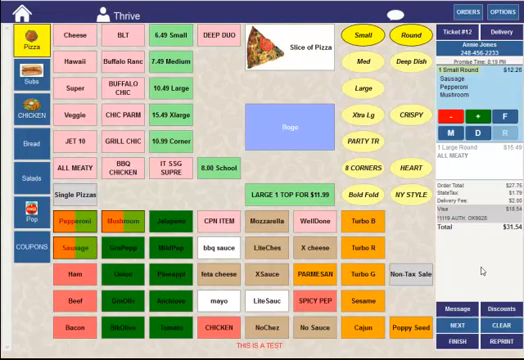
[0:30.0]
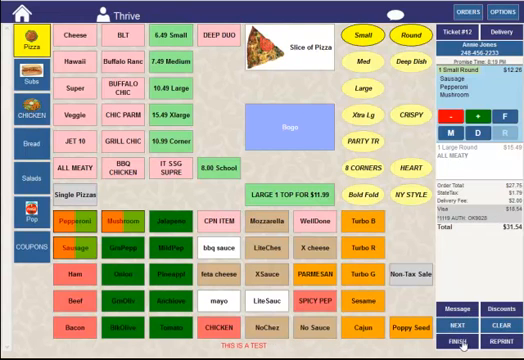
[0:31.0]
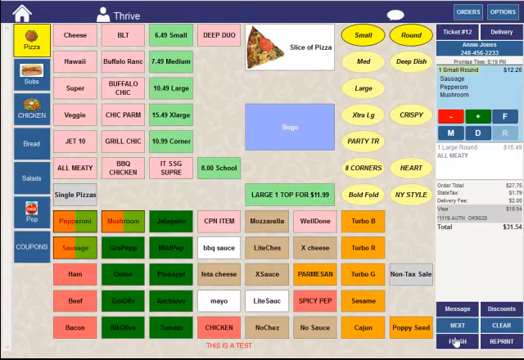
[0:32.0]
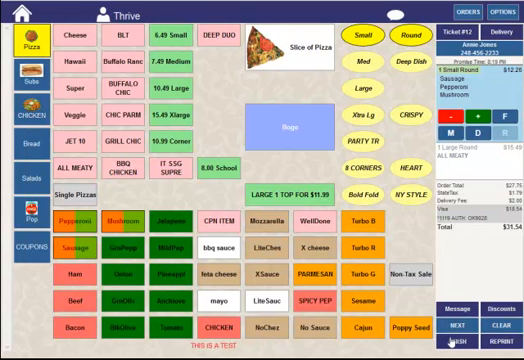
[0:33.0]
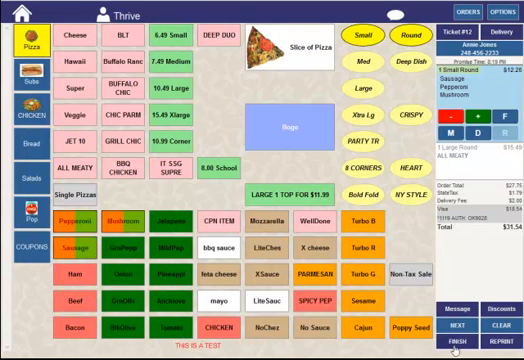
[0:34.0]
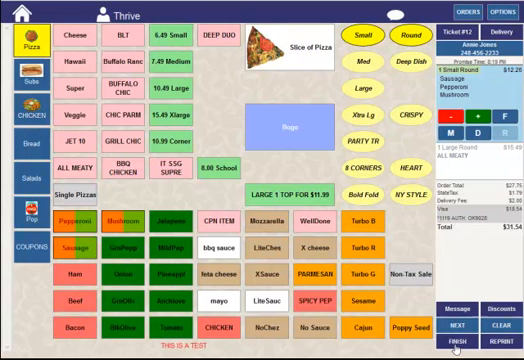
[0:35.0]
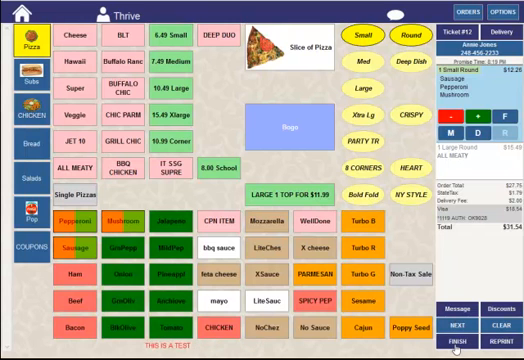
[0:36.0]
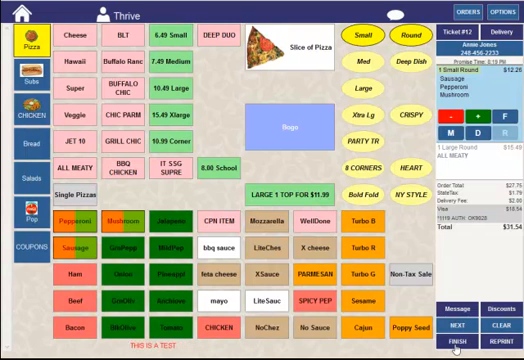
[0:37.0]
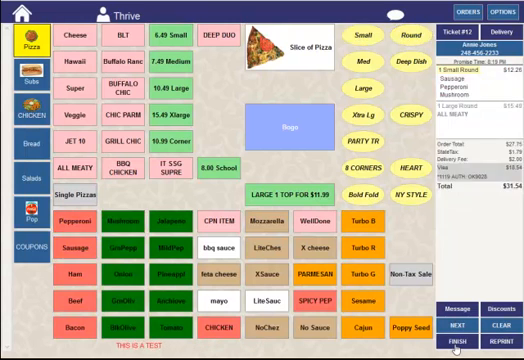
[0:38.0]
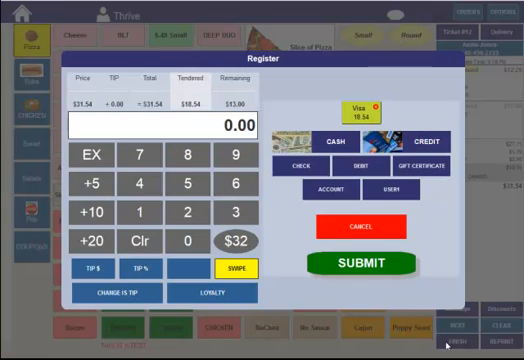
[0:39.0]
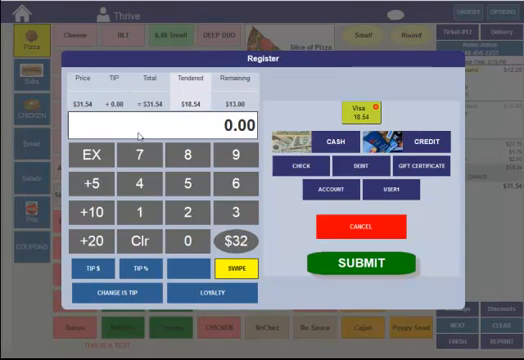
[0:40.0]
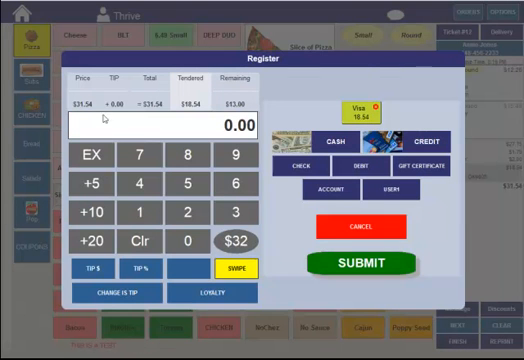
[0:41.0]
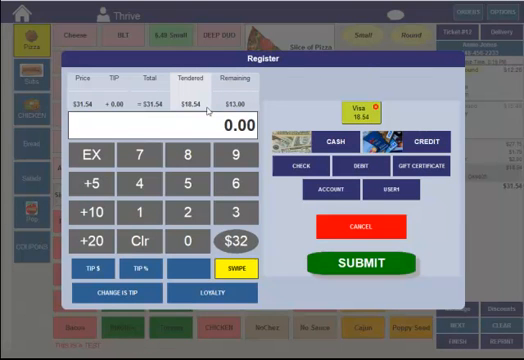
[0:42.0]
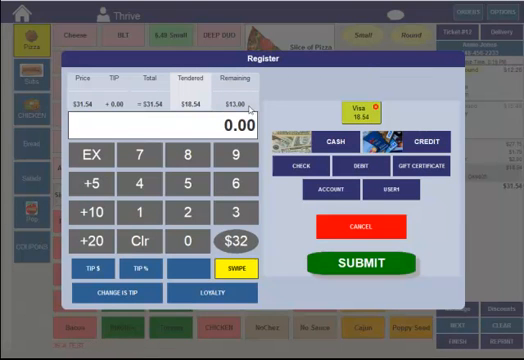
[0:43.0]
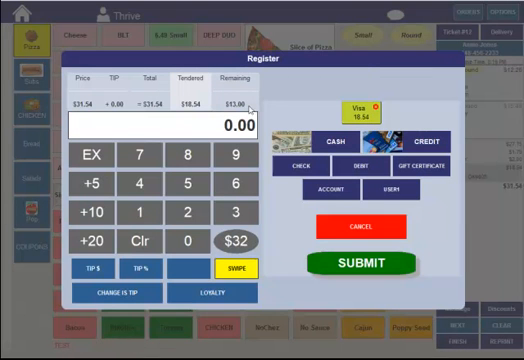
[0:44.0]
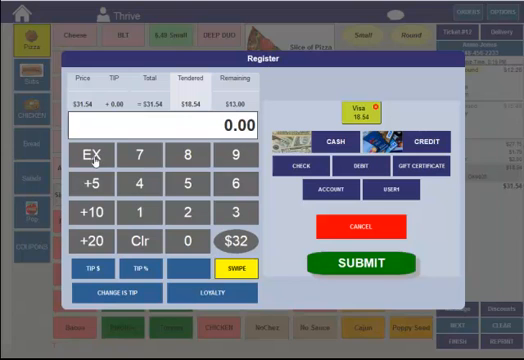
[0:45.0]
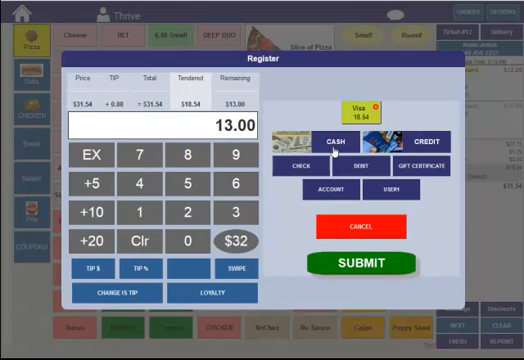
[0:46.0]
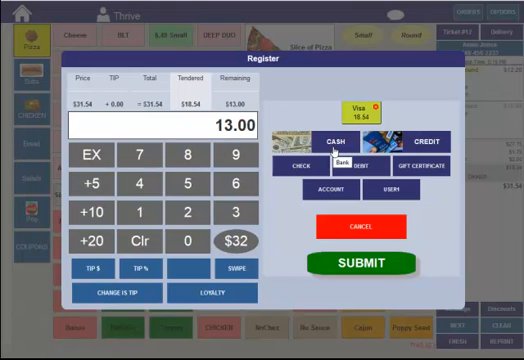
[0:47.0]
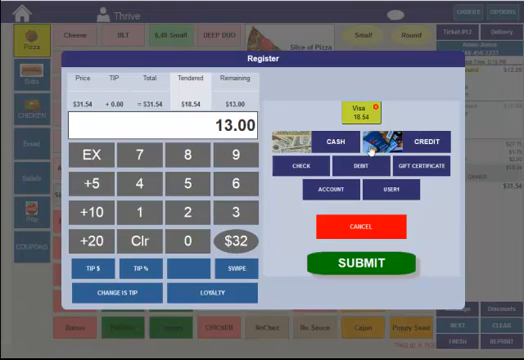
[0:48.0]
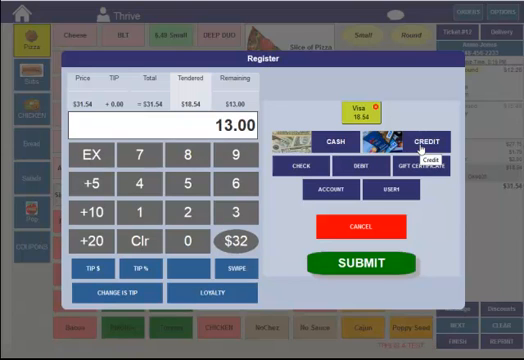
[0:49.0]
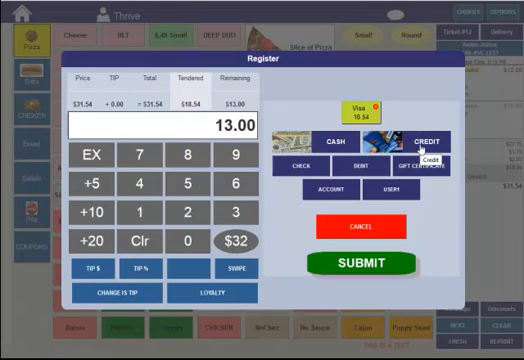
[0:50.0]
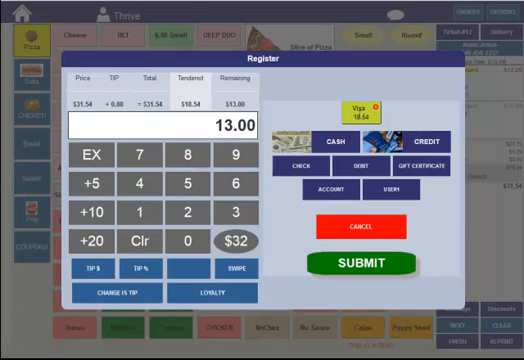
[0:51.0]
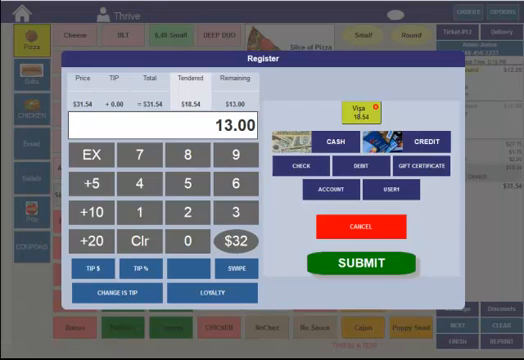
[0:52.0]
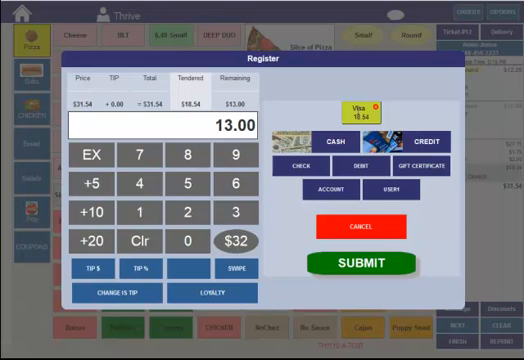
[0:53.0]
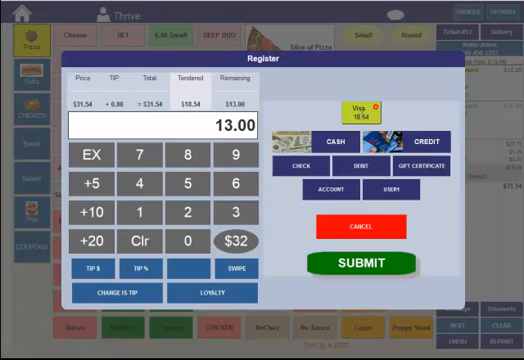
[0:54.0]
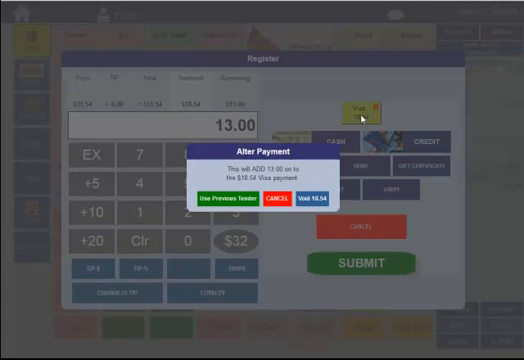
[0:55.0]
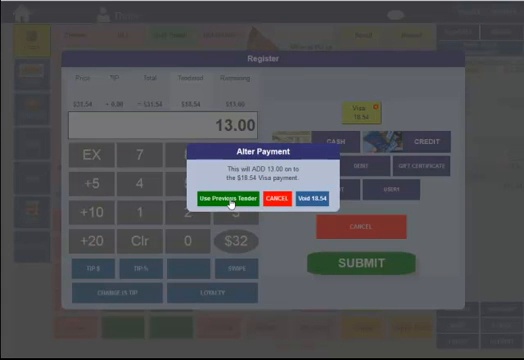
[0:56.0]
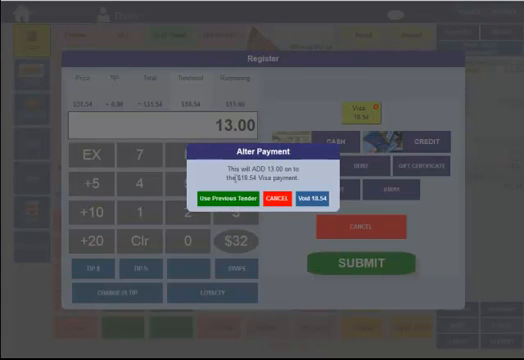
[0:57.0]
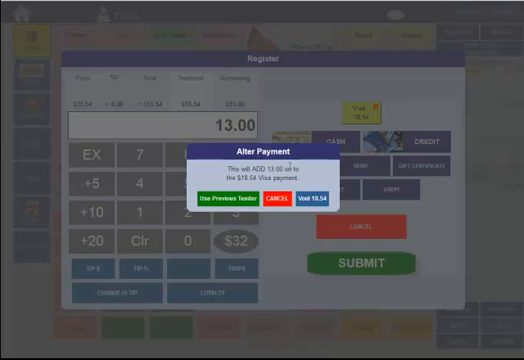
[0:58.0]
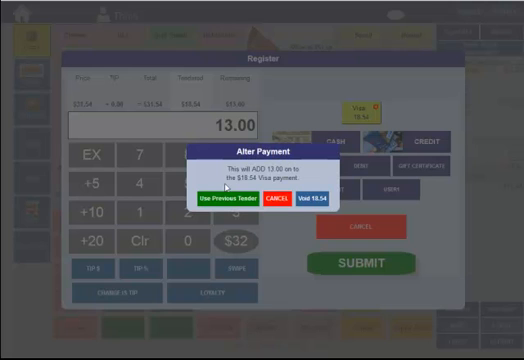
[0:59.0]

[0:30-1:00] What seems to be the restaurant's menu lists pizza, subs, chicken, bread and salads. The pizza menu is open, with many options: different types of cheeses, sauces and pizza flavors, and sizes from small to medium, large and extra large, as well as round and deep dish. In the middle, in green, is written "large one top for $11.99". On the right-hand side is the customer's order, with the total at the bottom. The view then moves to what looks like a cash register, where the payment method can be chosen as cash, credit or Visa. This customer pays with a Visa card.